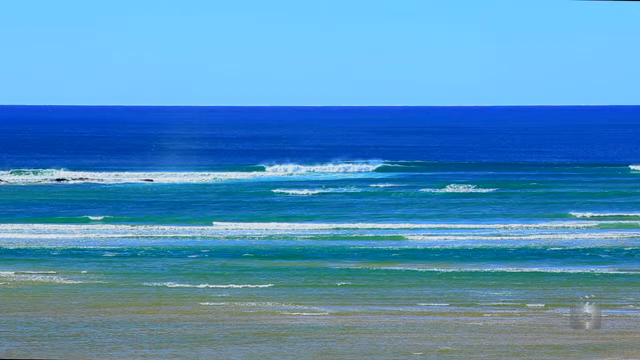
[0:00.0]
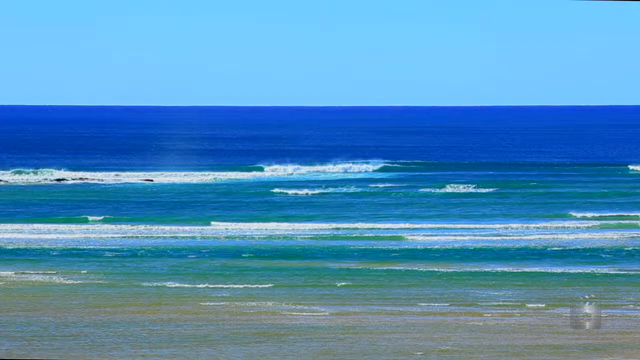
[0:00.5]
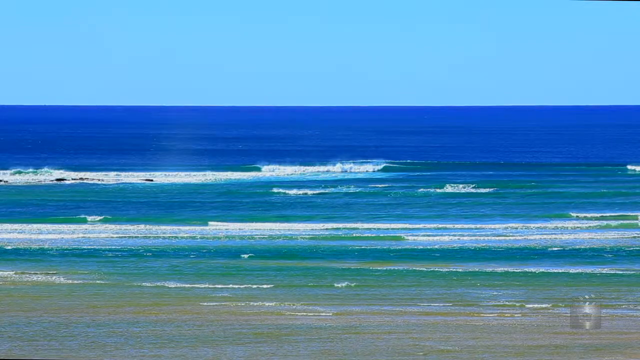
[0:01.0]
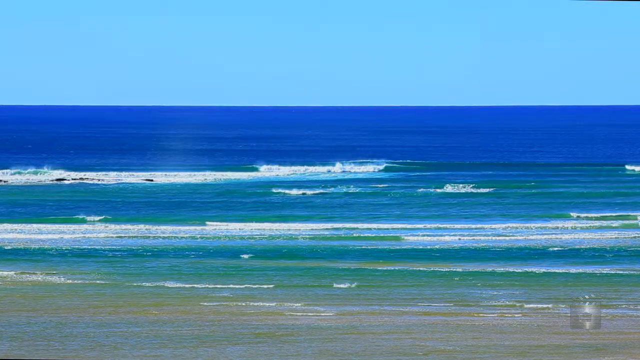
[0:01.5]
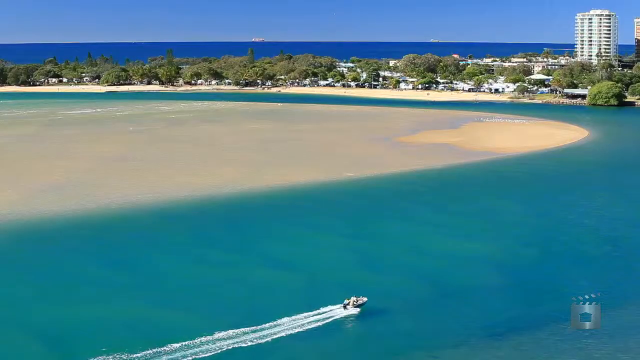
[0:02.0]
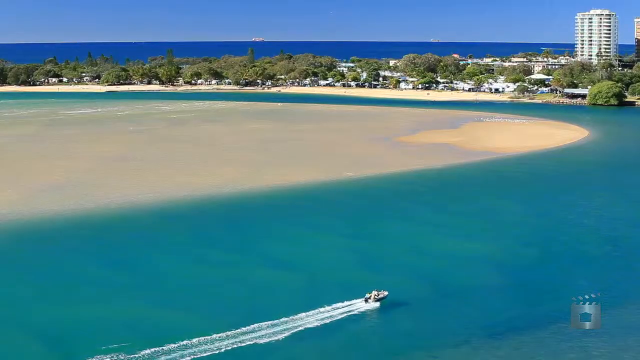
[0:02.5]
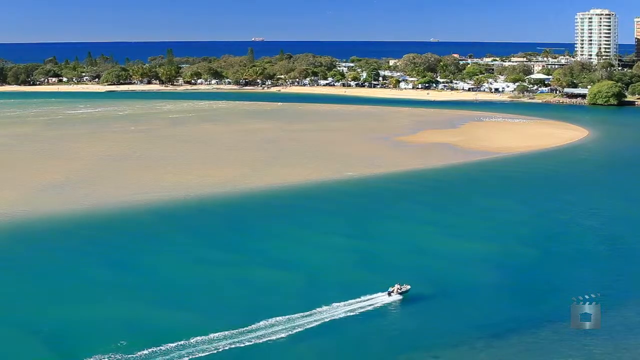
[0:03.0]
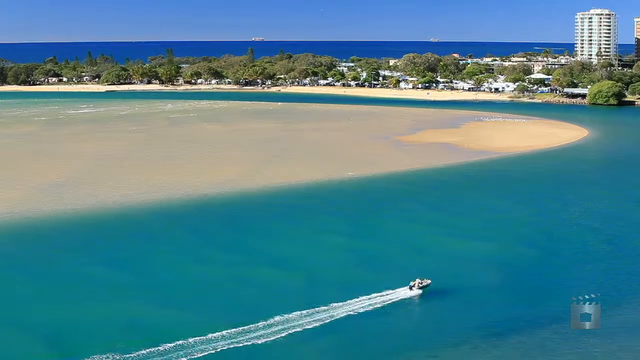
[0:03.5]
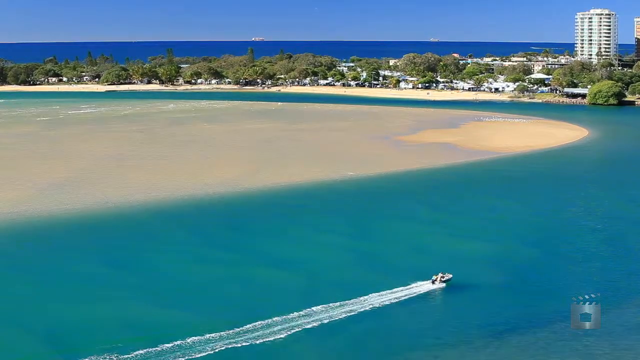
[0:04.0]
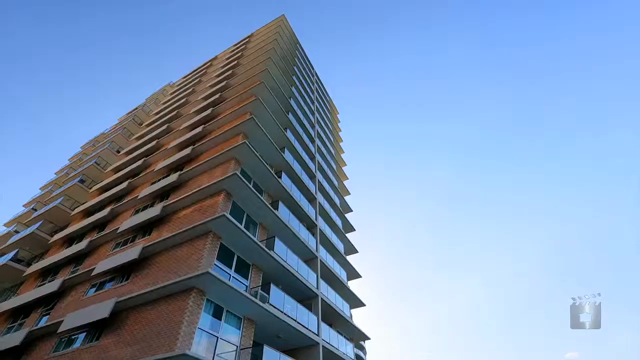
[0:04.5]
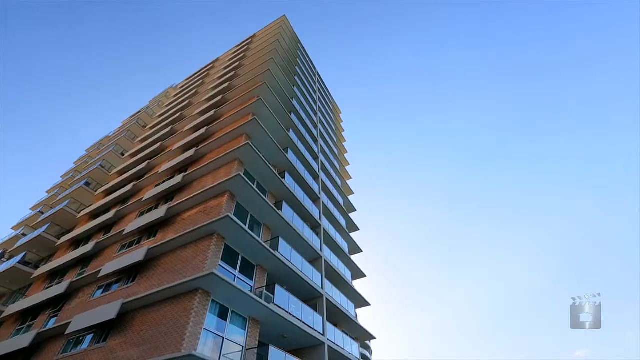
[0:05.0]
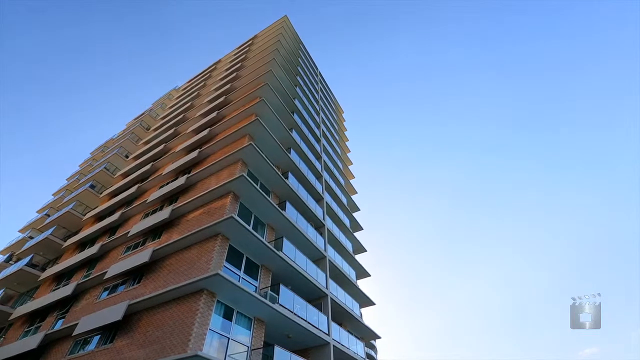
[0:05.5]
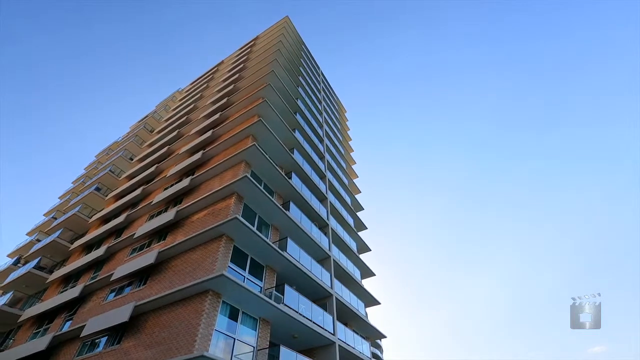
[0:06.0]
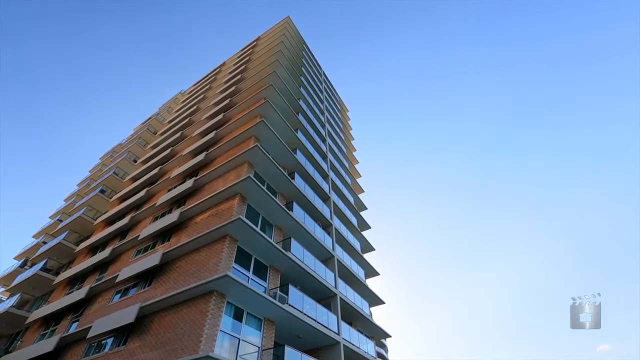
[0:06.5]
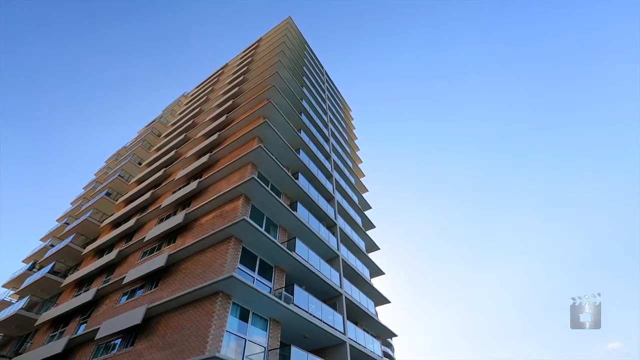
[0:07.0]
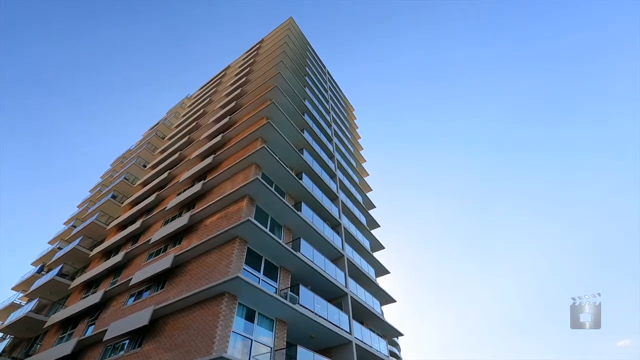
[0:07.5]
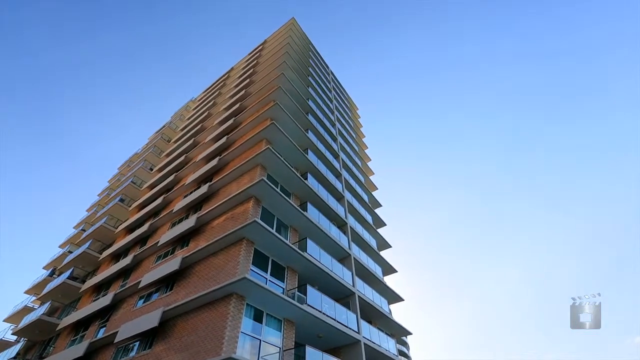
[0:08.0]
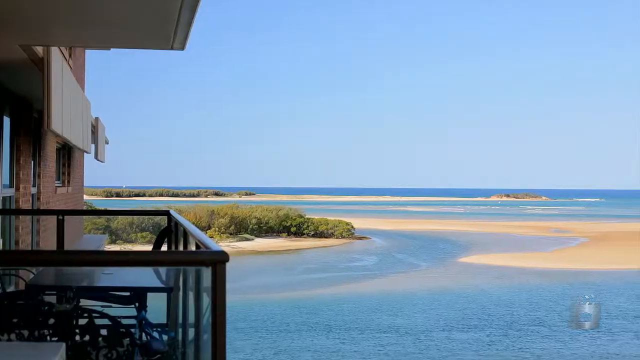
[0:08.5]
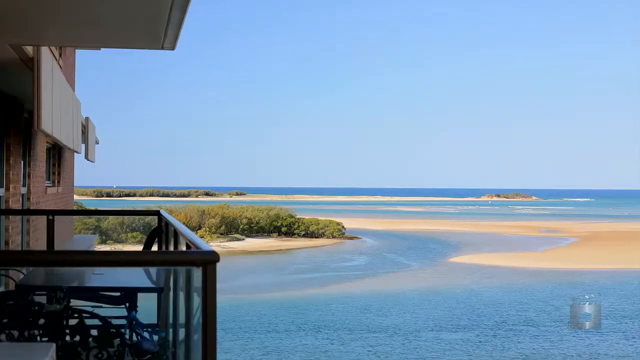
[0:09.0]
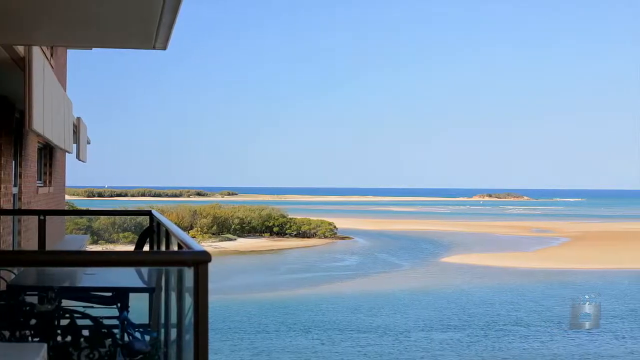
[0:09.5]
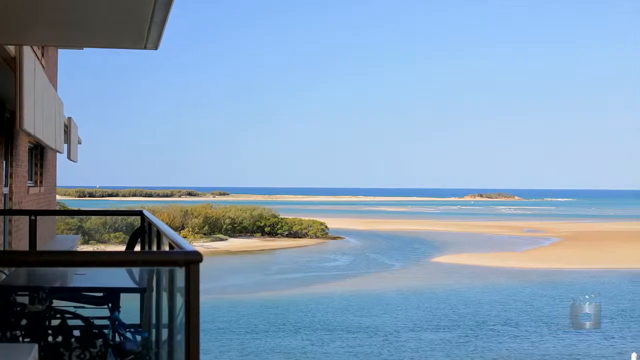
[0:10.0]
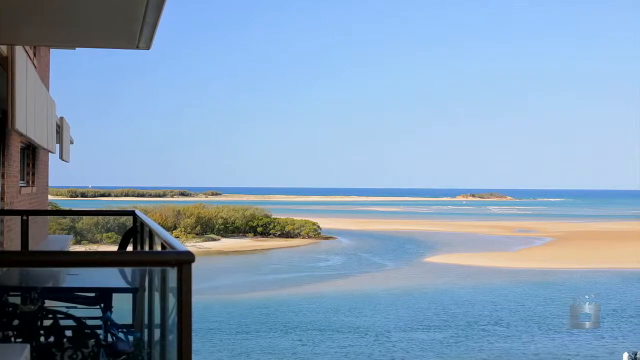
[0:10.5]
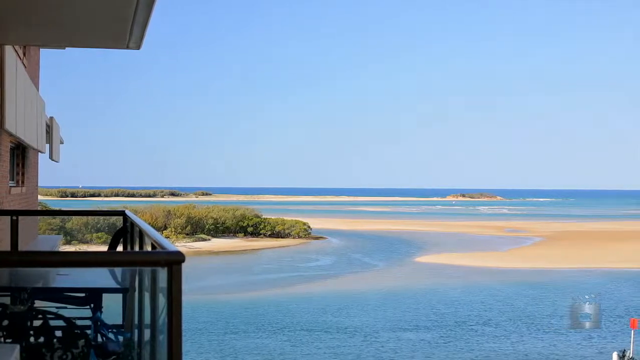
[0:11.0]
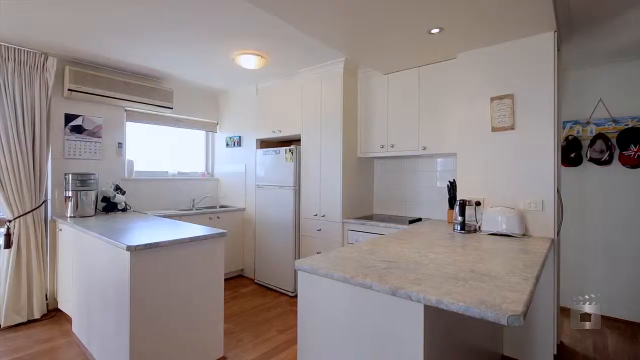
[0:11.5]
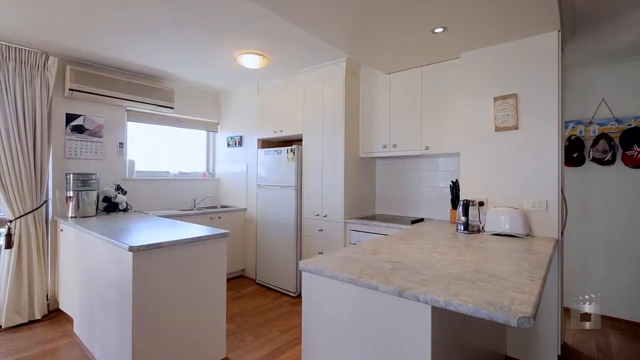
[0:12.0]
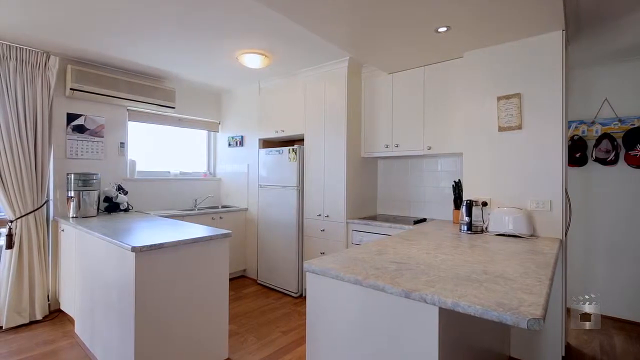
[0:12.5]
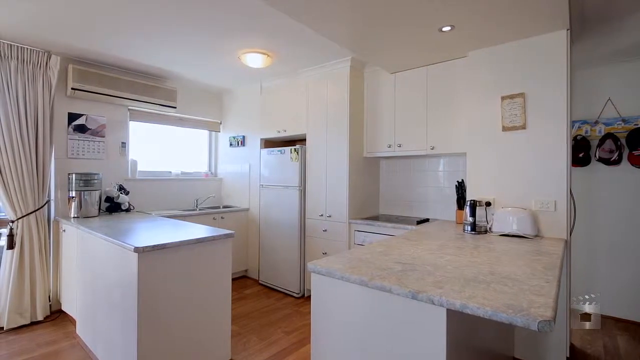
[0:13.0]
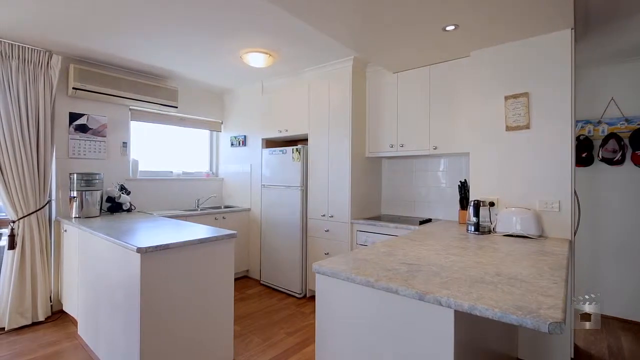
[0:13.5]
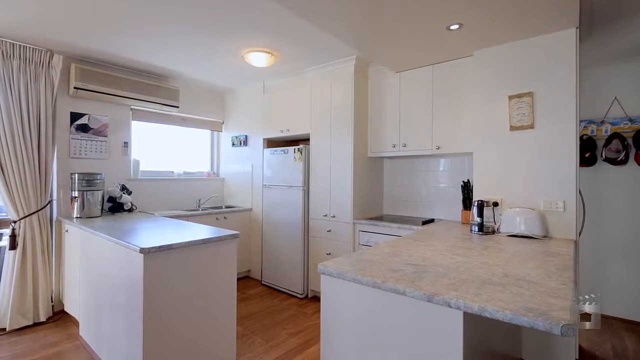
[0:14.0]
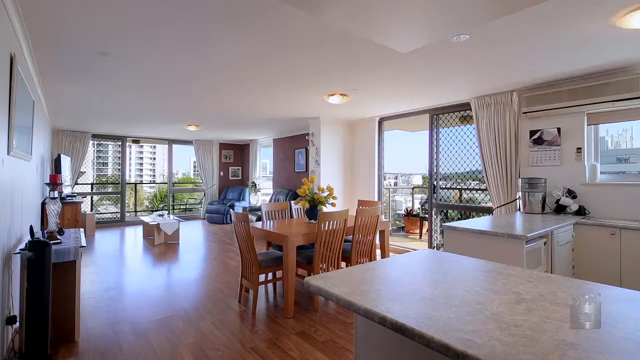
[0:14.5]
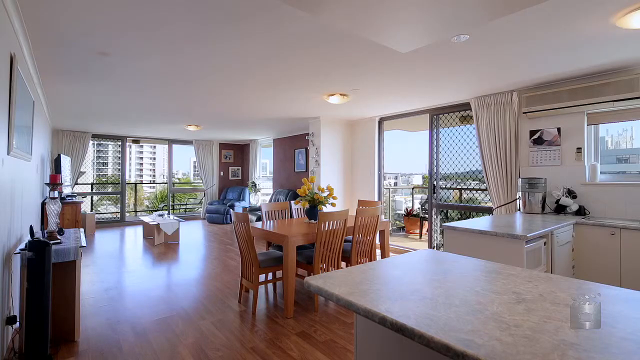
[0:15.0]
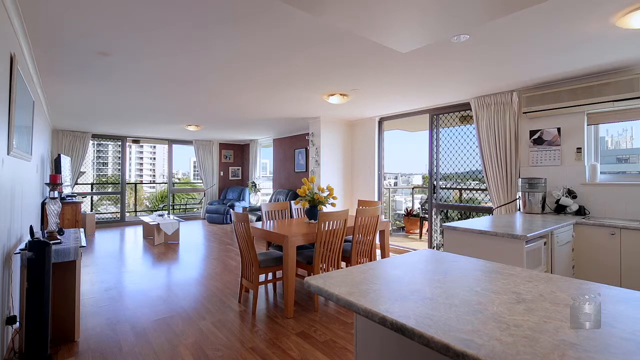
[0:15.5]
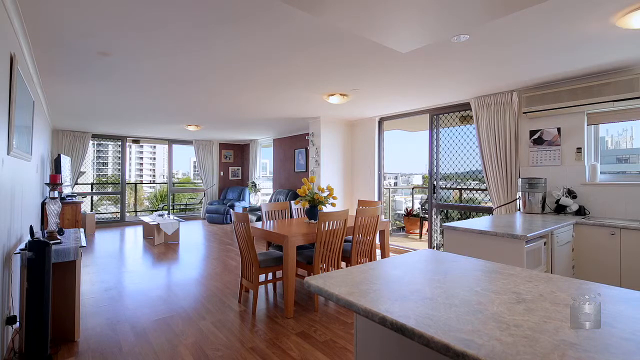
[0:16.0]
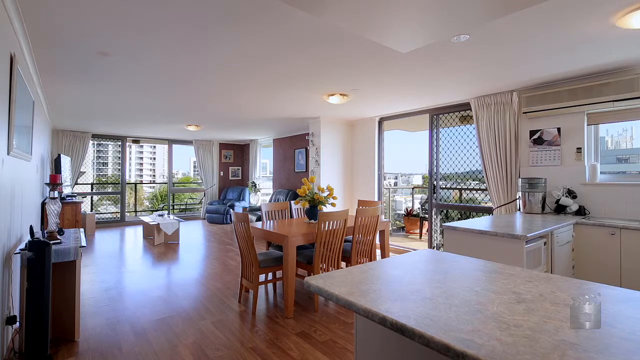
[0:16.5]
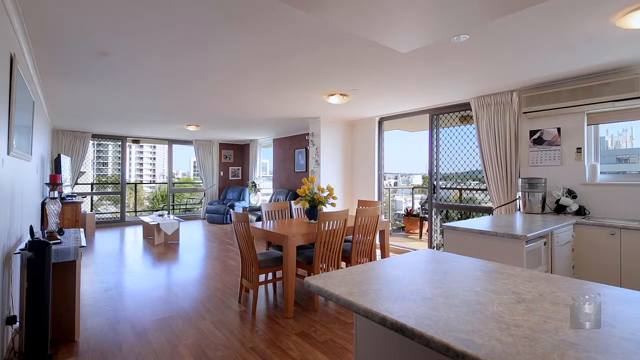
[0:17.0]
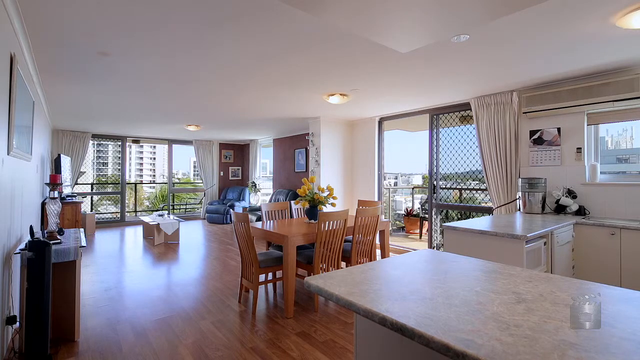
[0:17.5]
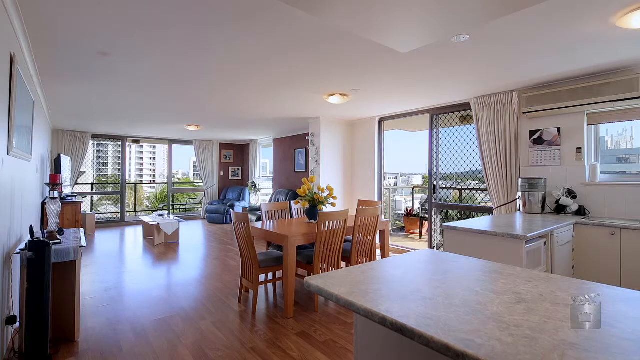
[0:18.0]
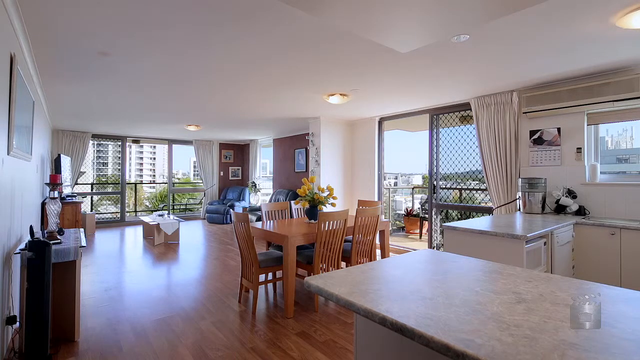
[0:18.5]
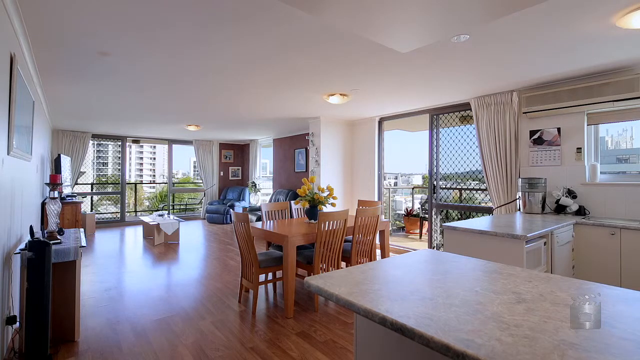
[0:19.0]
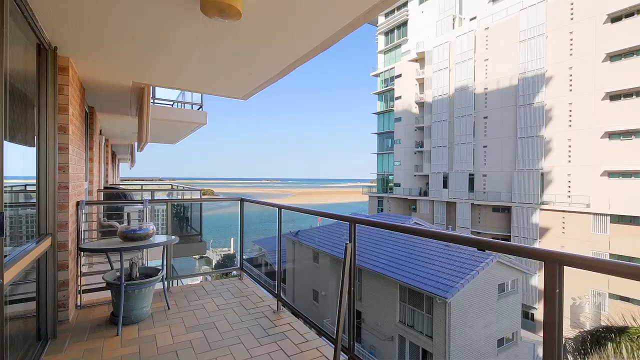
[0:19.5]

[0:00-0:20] A top-down view of a beach opens the video, with blue ocean waves hitting a sandy, tan-colored beach. It cuts to a speedboat cutting through clear blue water, partially on top of a sandbar, and a beach with private homes and a tall multi-story apartment or condo building is also visible. All the buildings are directly next to the beach. The video then cuts to the interior of a house or apartment, showing the kitchen, which has white cabinets, a slim white refrigerator and modern appliances. Next, from an angle in the kitchen, the view looks toward the rest of the family living spaces: a brown wooden dining table with six chairs pushed under it, all with blue cushions; an open balcony door showing a large potted plant and a view outside; and a living room with a black armchair, a blue armchair and a flat-screen TV. Through the living room, large windows open up to another balcony.